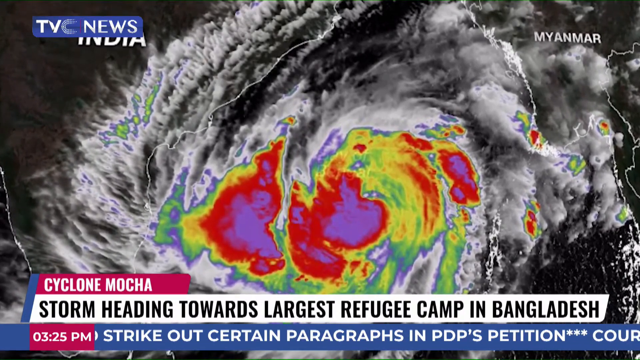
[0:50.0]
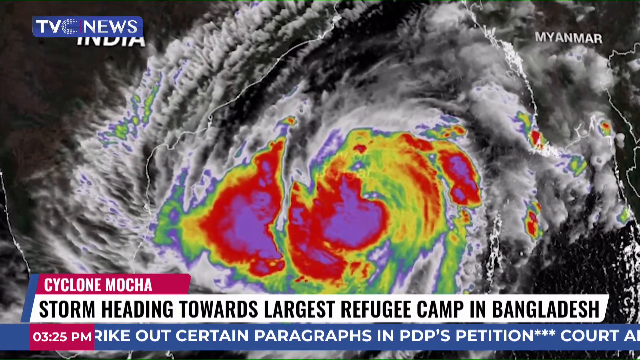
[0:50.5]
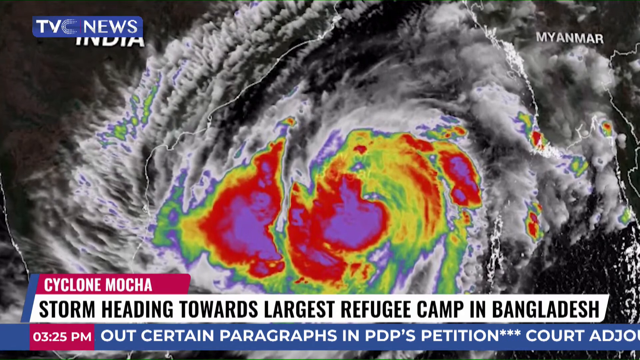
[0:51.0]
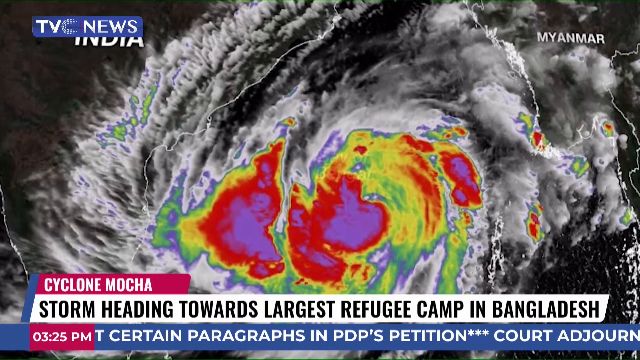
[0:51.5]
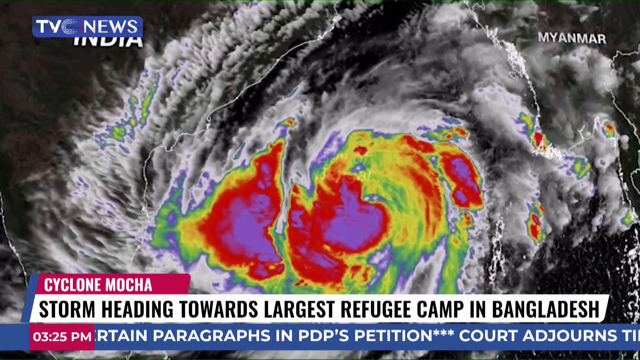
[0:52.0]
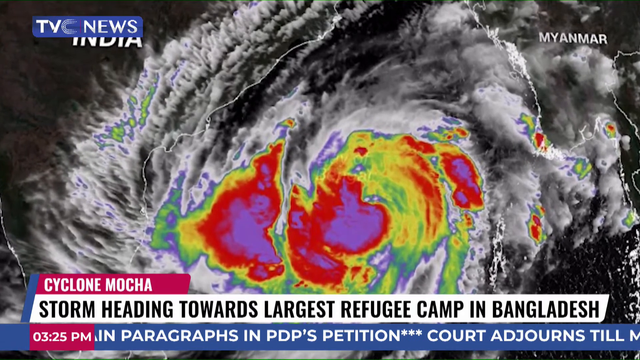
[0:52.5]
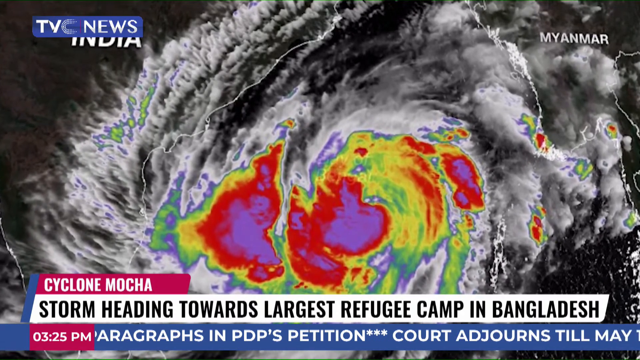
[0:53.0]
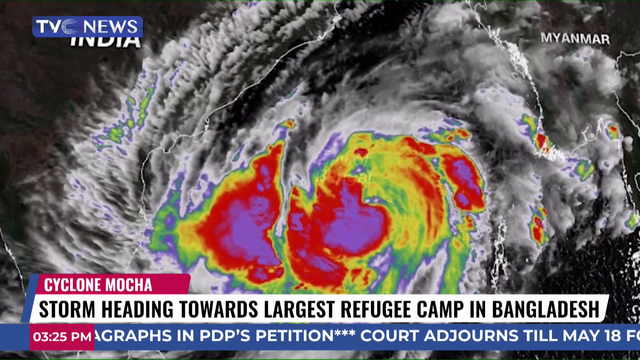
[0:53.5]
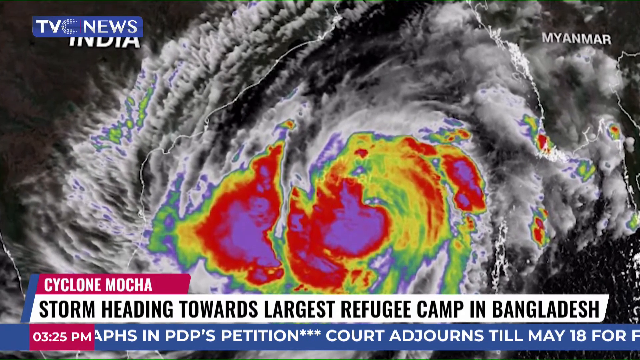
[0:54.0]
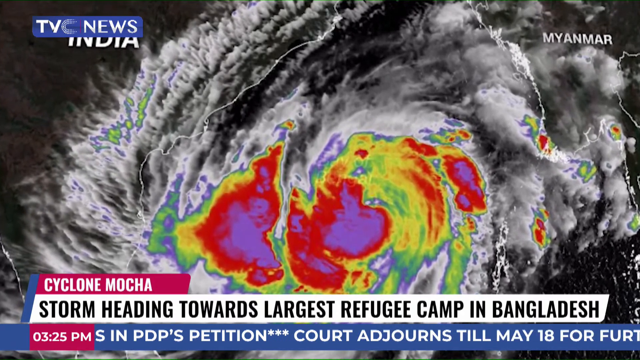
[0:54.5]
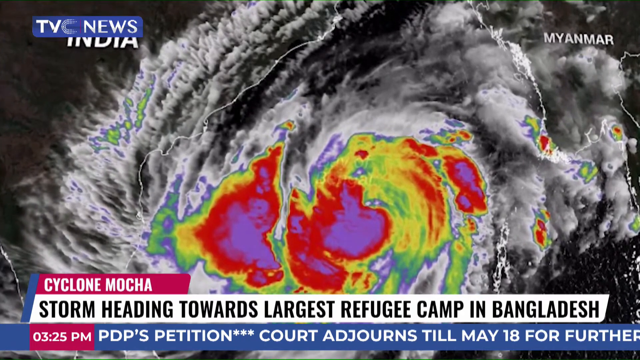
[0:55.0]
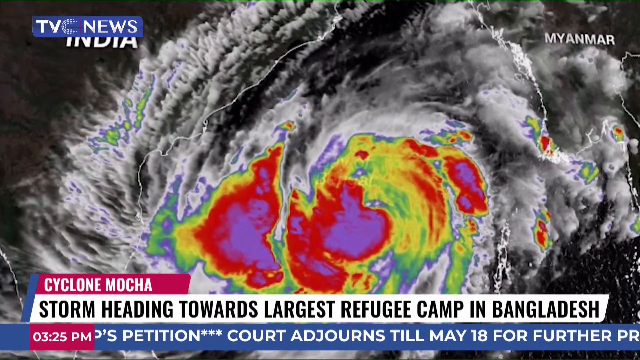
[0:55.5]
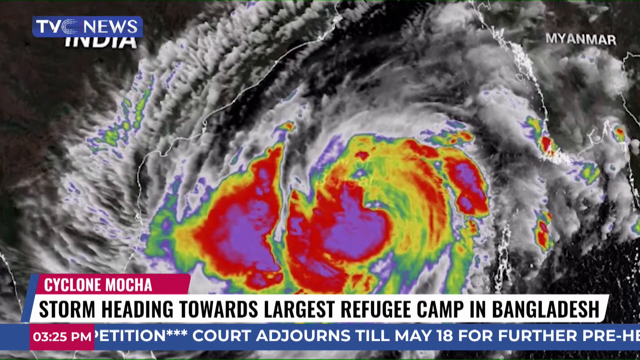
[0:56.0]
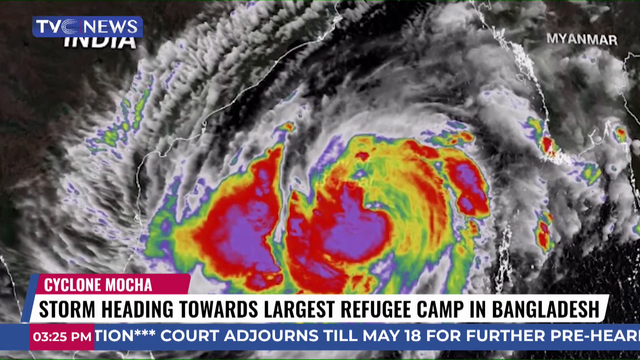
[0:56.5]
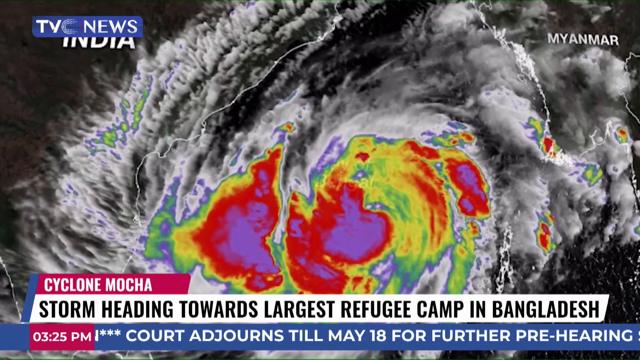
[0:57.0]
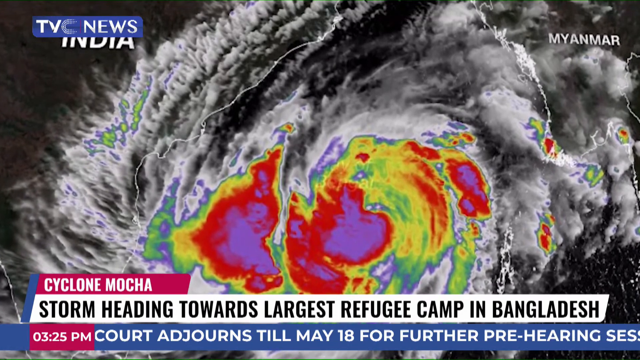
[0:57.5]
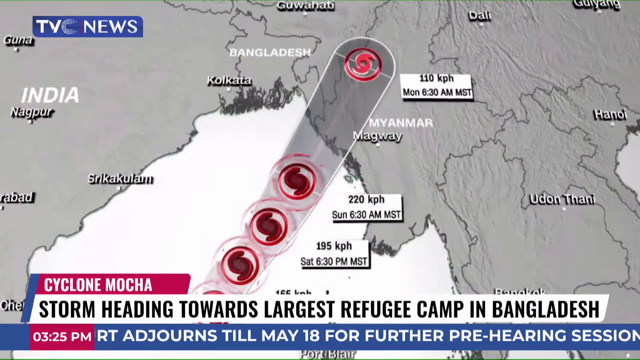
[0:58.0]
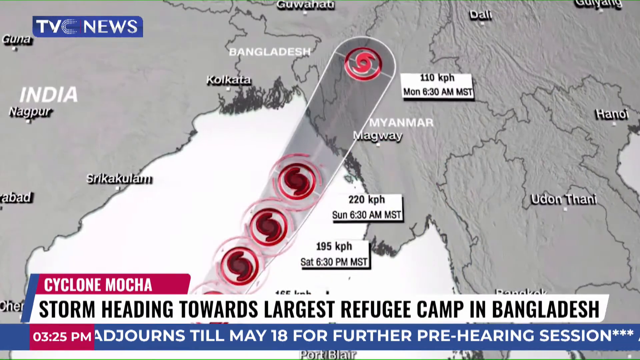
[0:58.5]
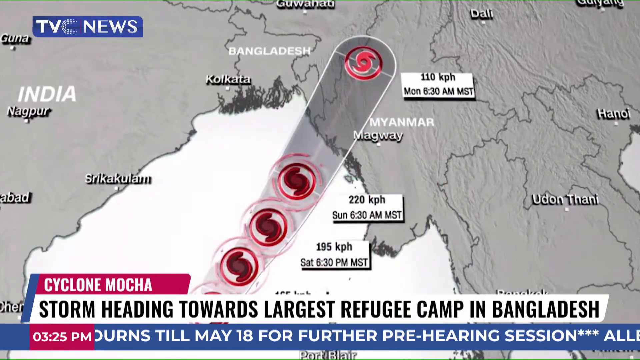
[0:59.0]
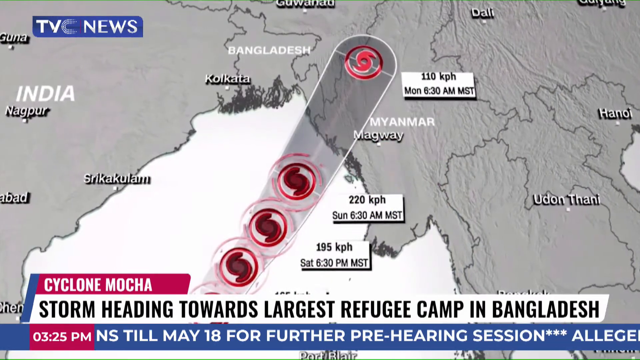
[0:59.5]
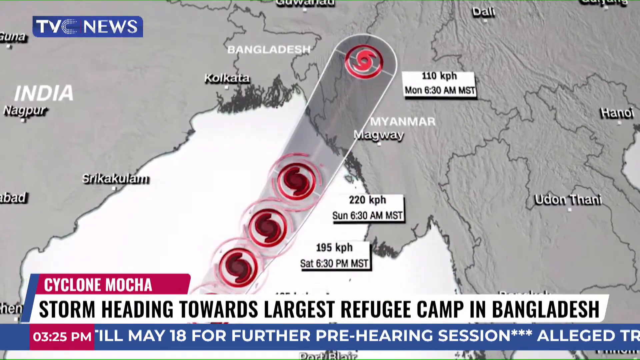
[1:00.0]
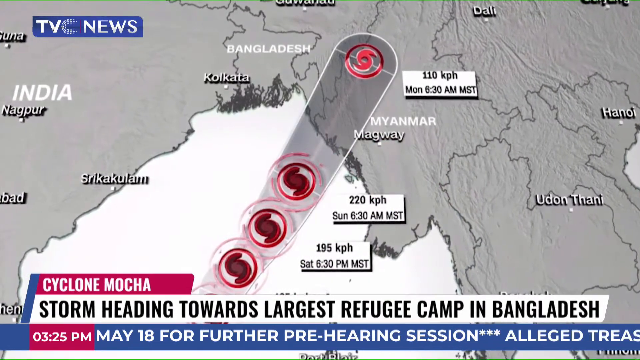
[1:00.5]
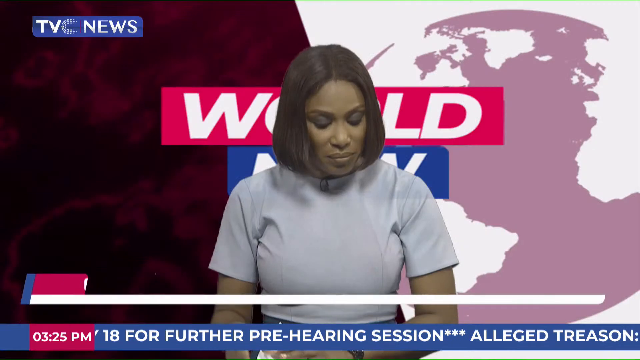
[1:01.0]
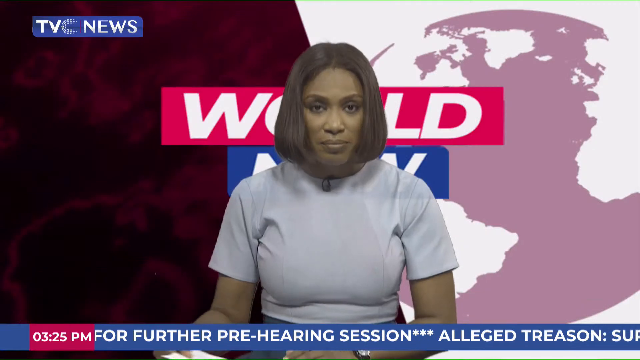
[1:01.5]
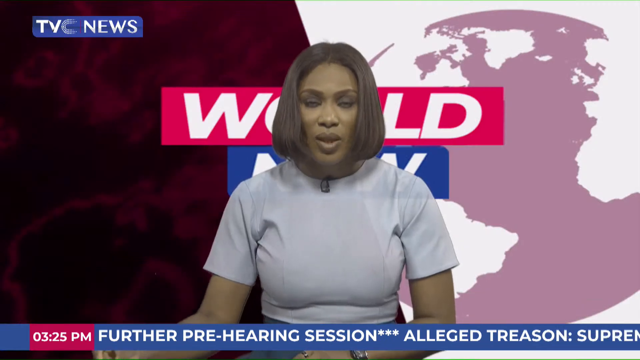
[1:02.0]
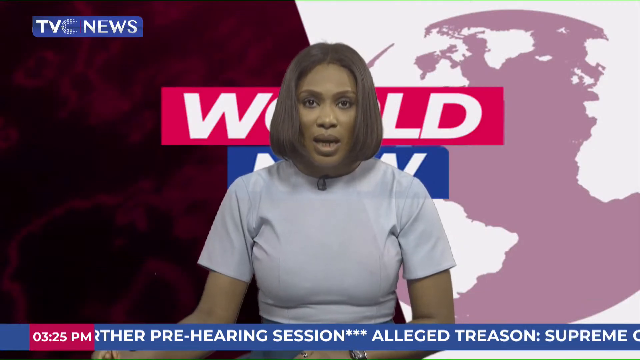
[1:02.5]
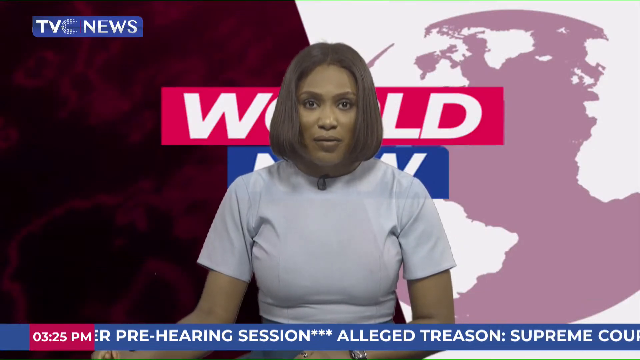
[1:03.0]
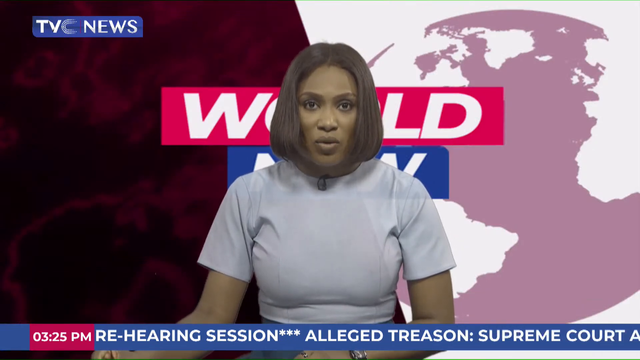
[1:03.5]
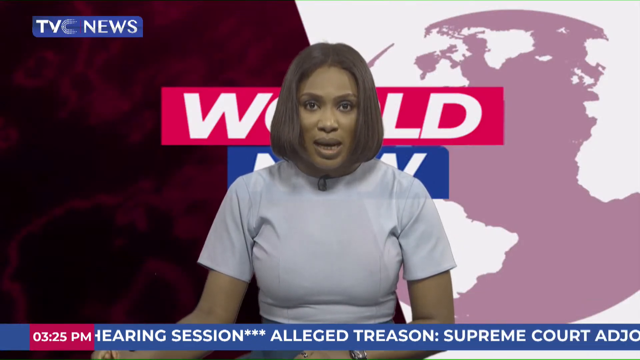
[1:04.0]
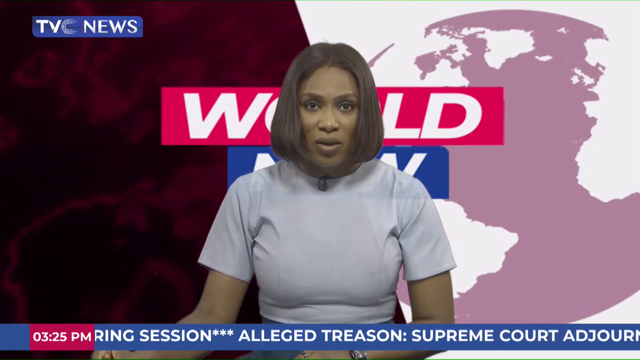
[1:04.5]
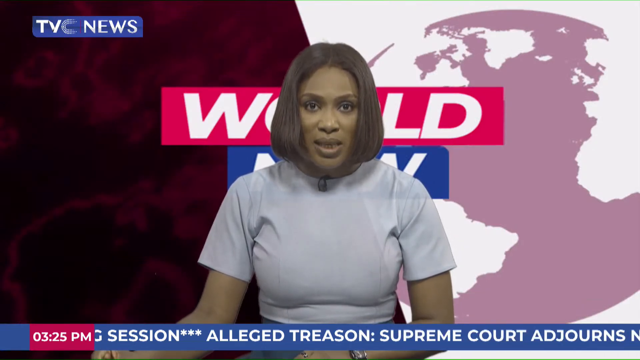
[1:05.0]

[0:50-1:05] The broadcast is TVC News from India, with a female reporter. Winds are gusting, everything is blowing, and trees are bent over. The coverage concerns Cyclone Moka heading towards the largest refugee camp in Bangladesh, and the center of the storm is shown over land.